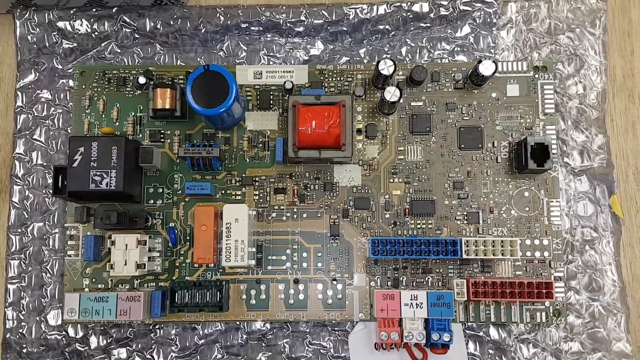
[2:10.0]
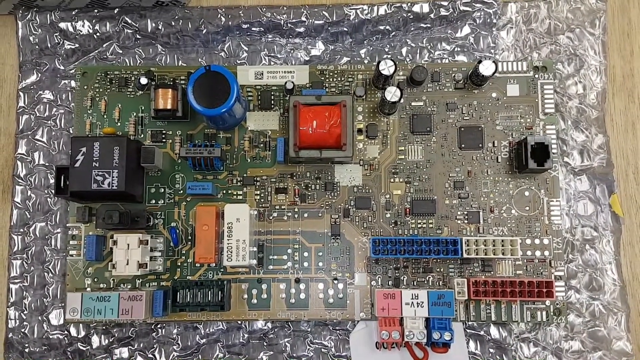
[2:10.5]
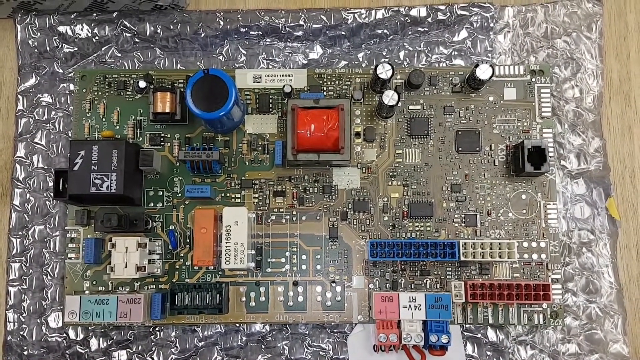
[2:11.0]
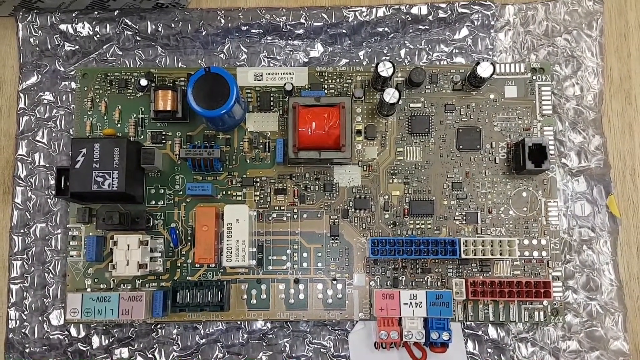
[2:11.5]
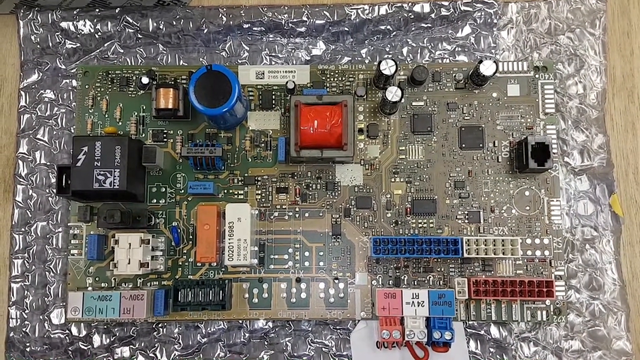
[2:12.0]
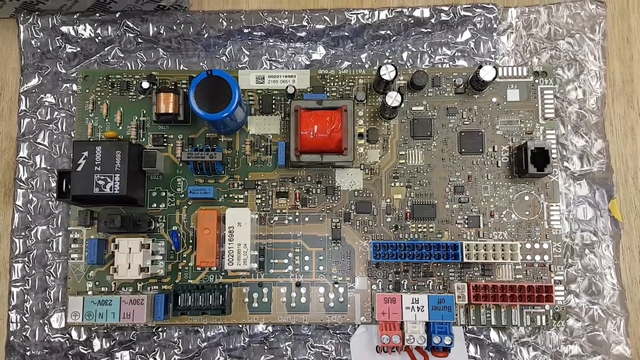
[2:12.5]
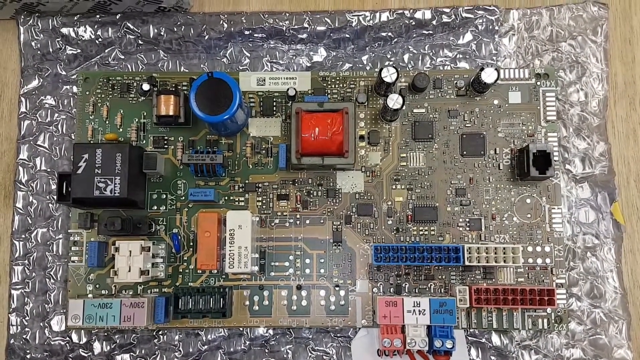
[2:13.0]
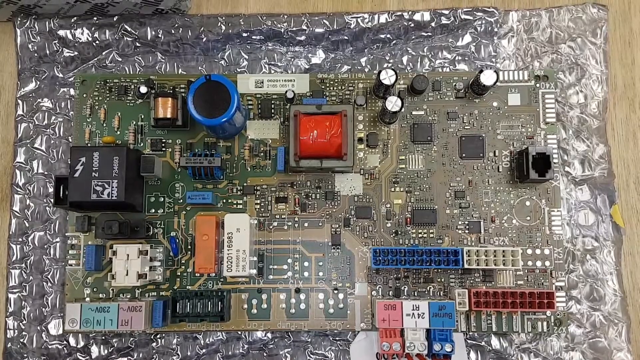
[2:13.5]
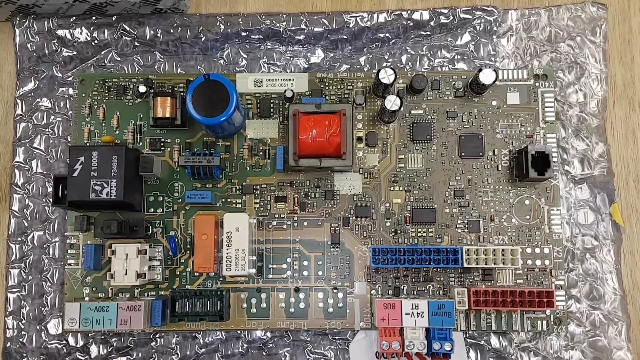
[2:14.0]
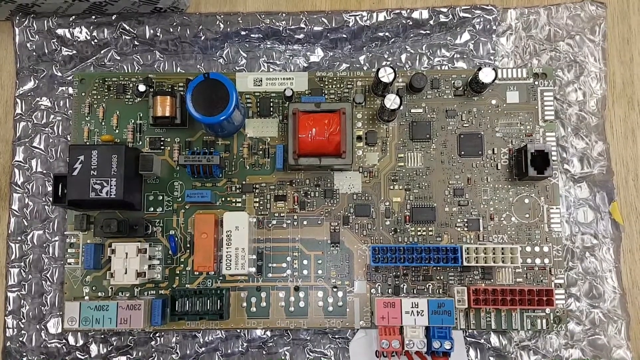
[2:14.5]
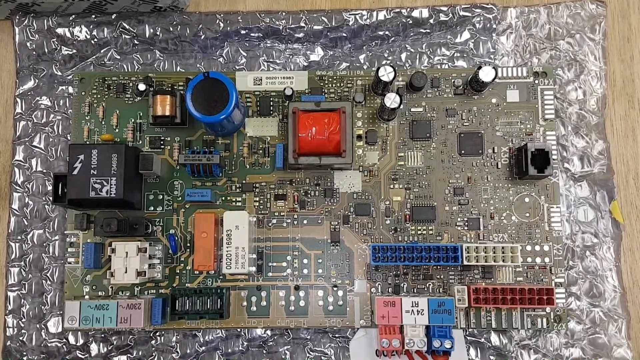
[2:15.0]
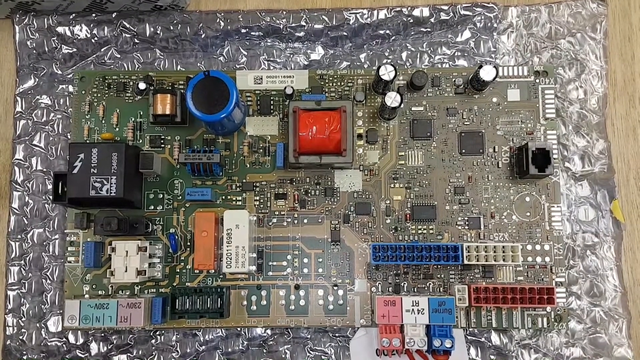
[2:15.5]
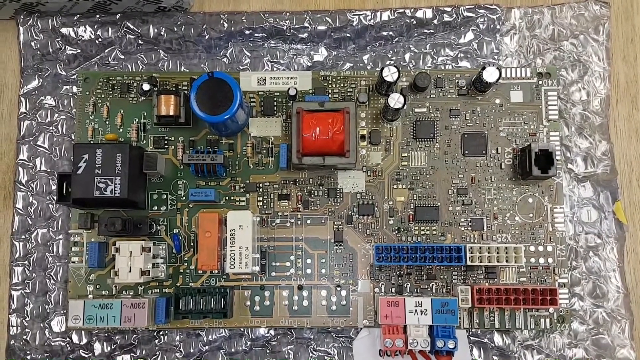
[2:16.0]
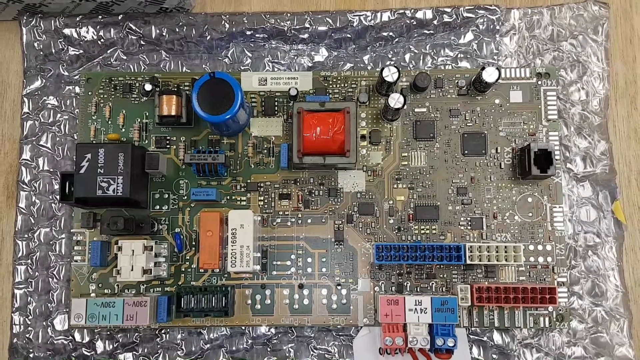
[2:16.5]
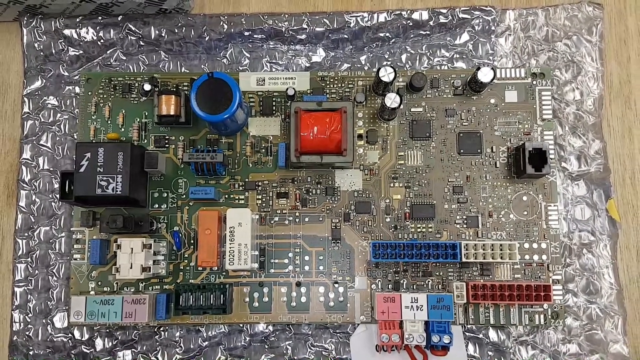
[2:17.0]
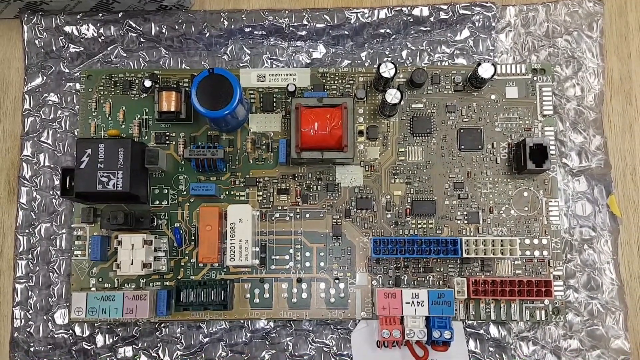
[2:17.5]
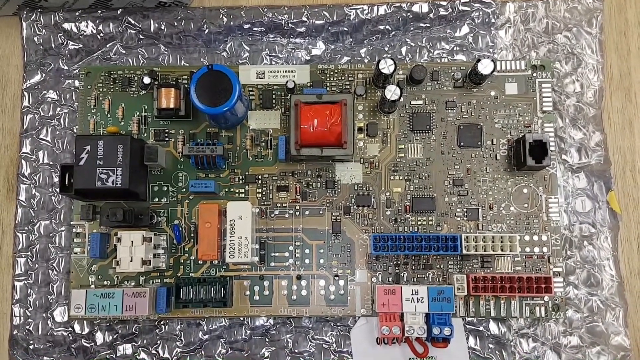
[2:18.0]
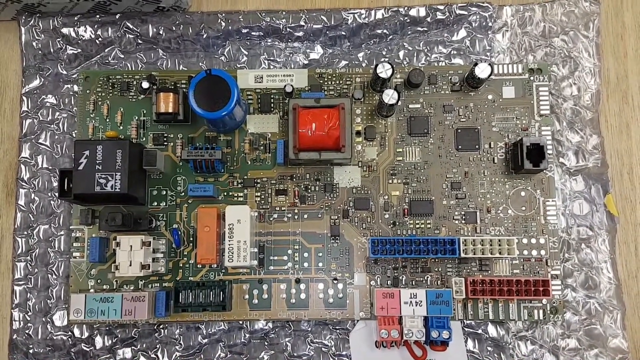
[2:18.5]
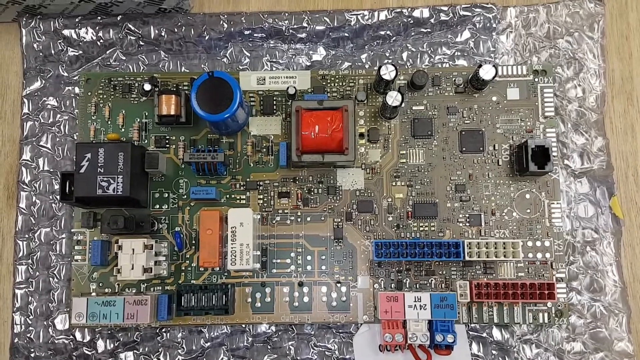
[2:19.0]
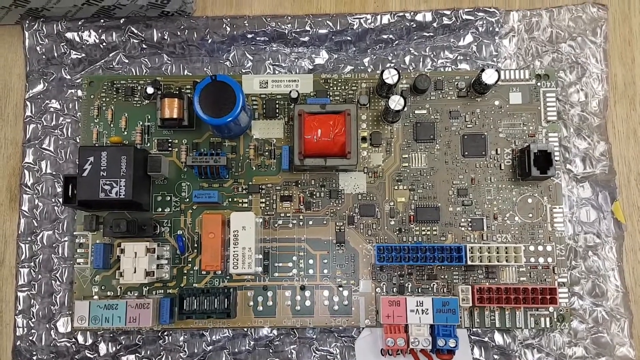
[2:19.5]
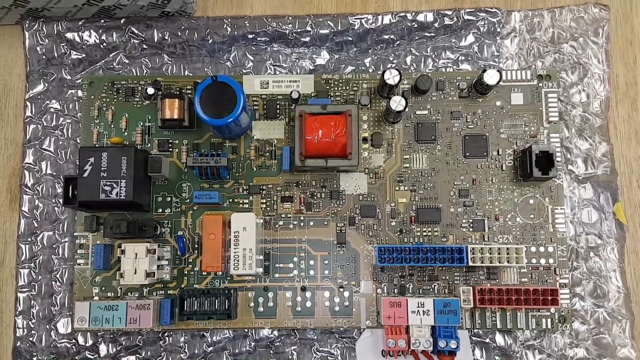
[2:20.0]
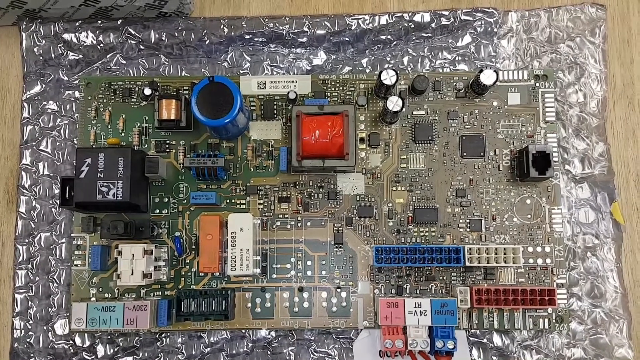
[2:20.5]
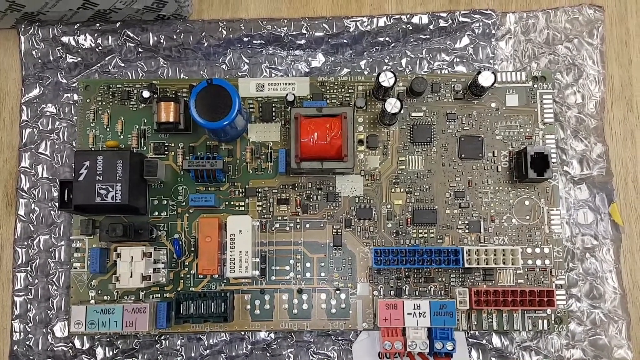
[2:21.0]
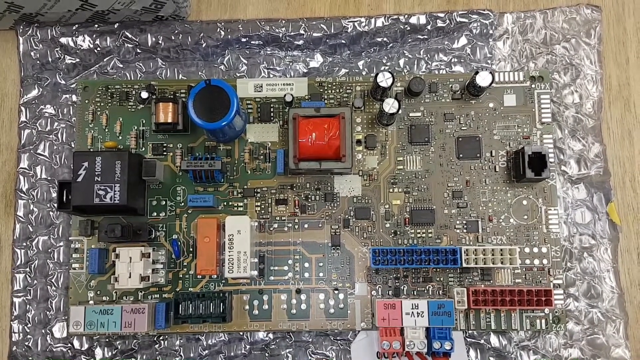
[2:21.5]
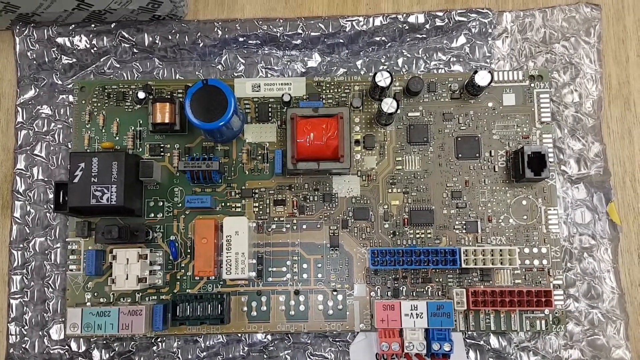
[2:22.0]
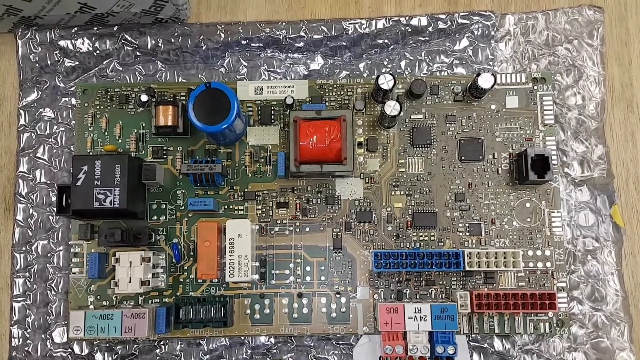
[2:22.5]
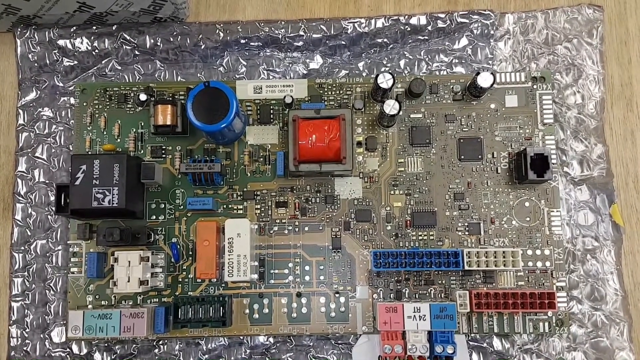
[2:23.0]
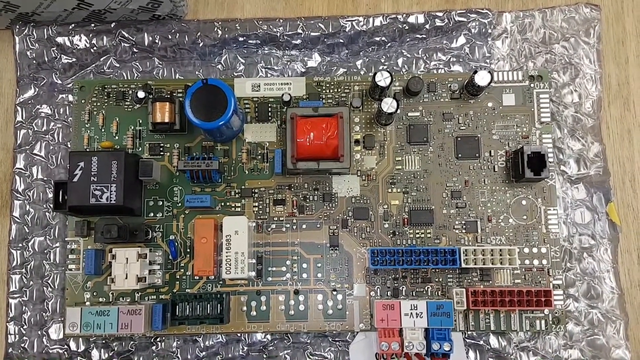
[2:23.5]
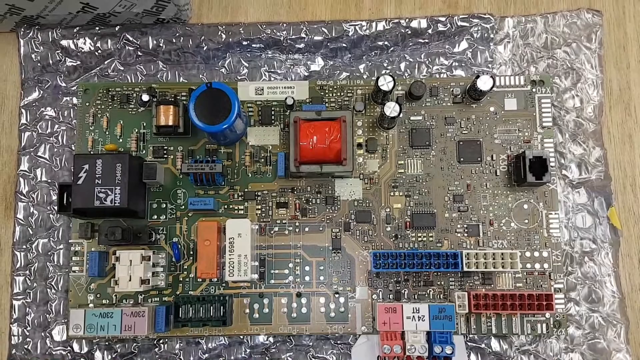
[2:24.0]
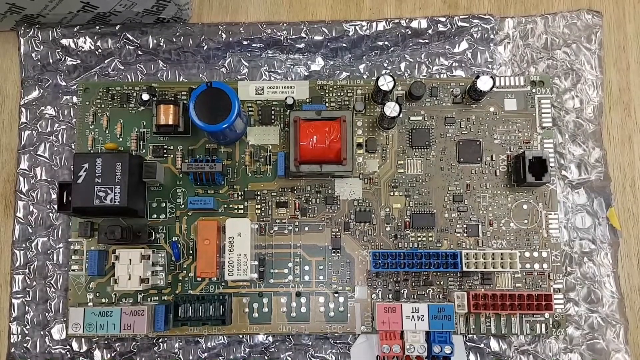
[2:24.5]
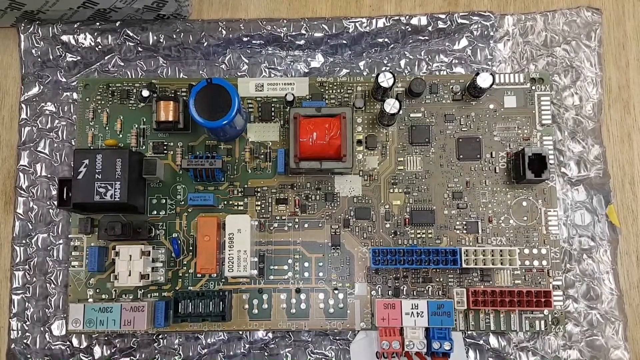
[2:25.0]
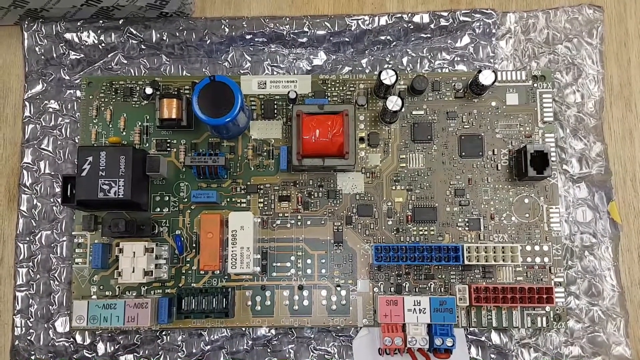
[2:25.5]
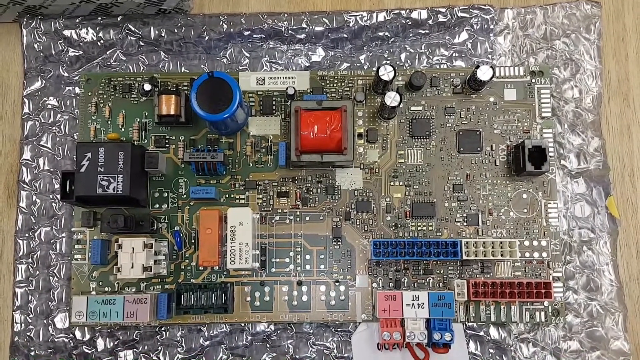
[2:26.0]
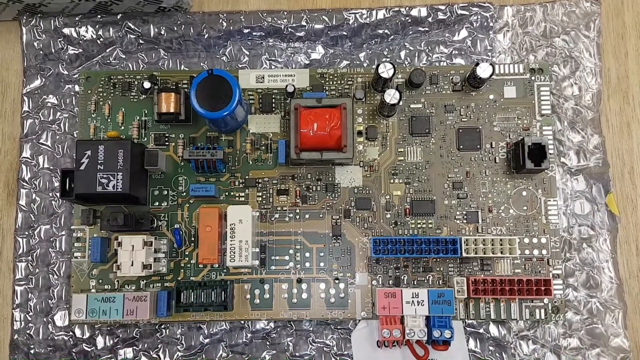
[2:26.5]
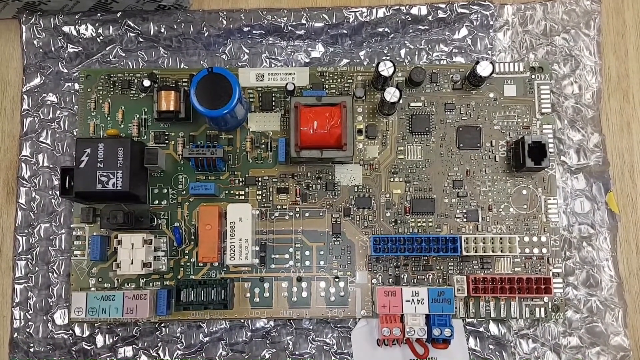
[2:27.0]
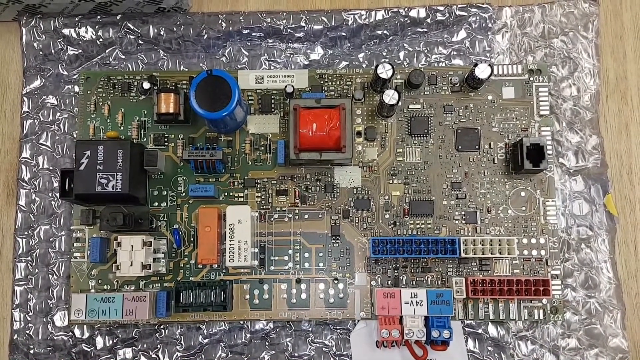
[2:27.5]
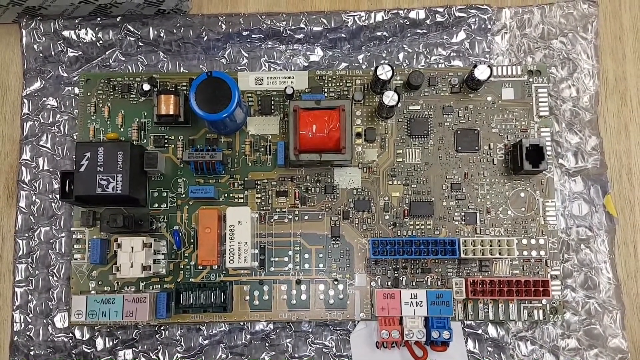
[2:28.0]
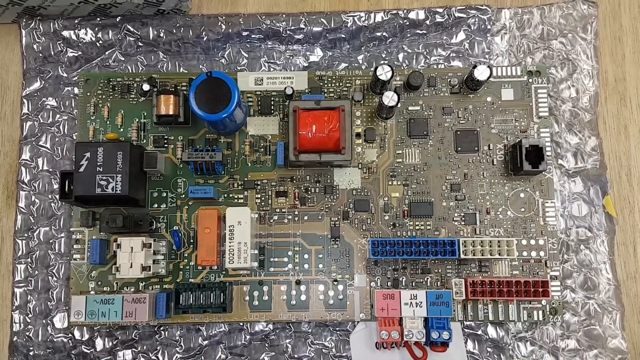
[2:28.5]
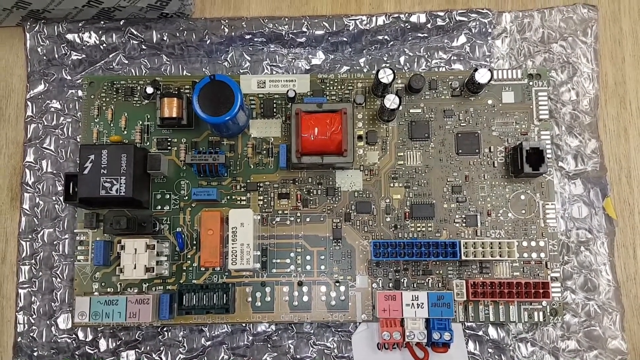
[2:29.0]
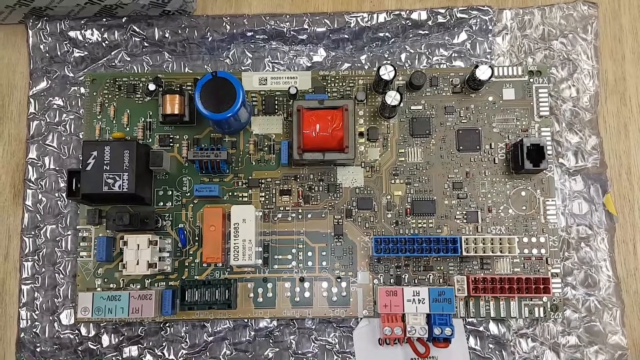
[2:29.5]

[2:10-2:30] The second circuit board continues to be shown. It kind of looks like the same board as the first one, but the placement of different components differs.